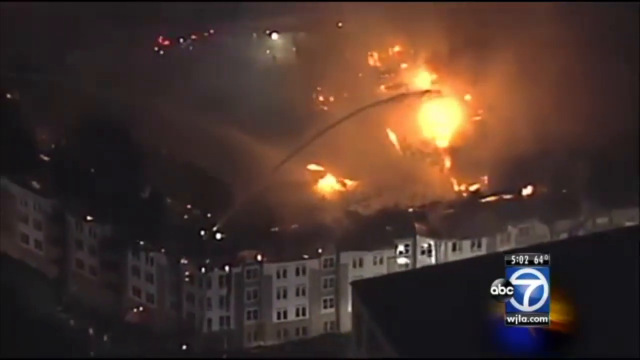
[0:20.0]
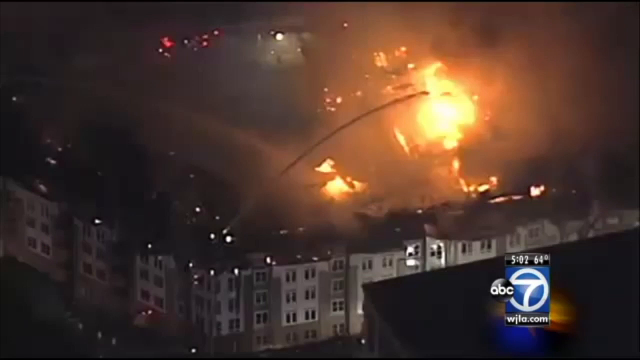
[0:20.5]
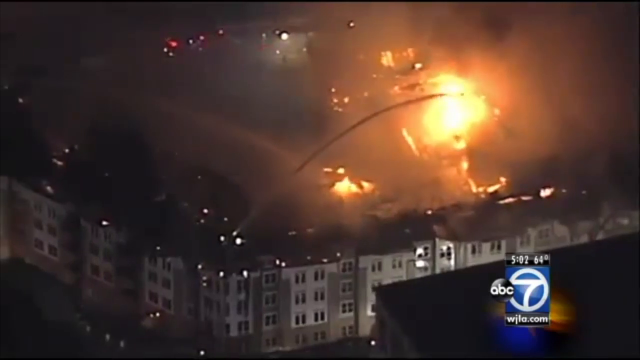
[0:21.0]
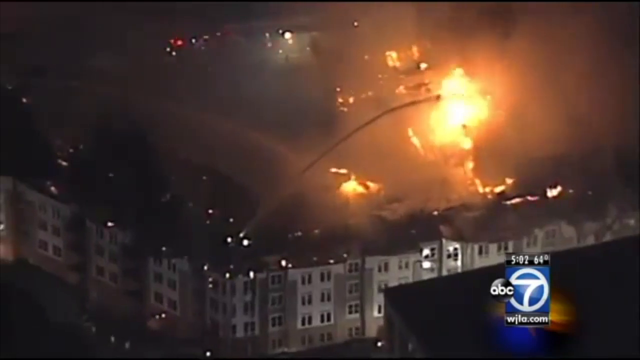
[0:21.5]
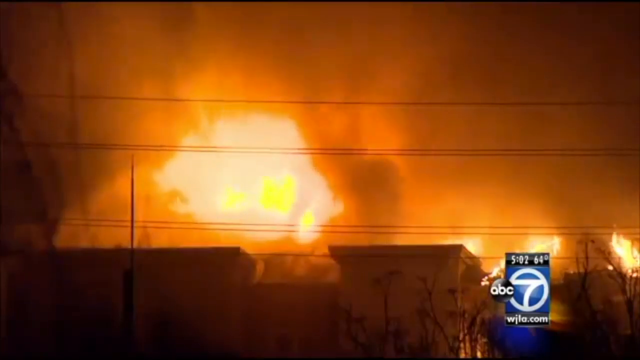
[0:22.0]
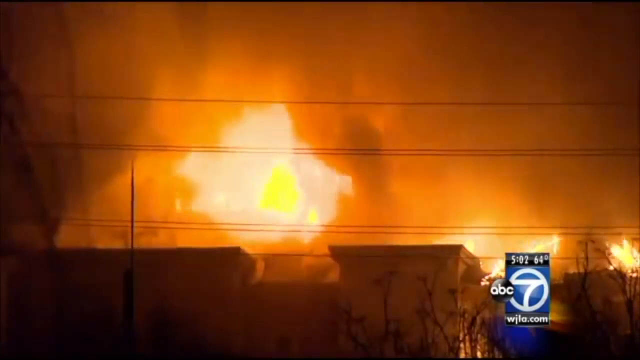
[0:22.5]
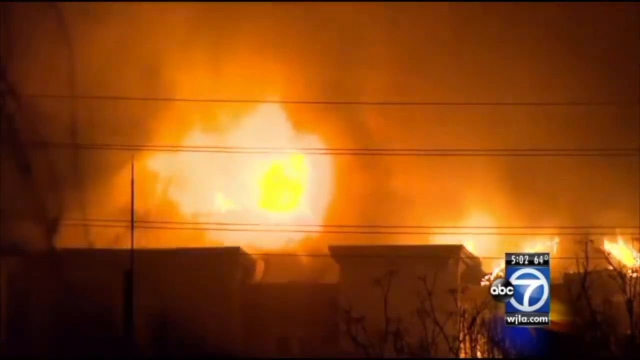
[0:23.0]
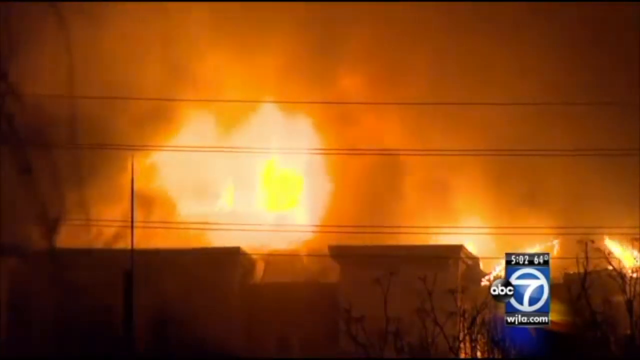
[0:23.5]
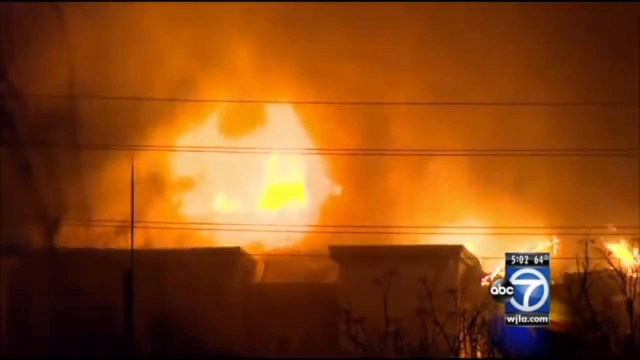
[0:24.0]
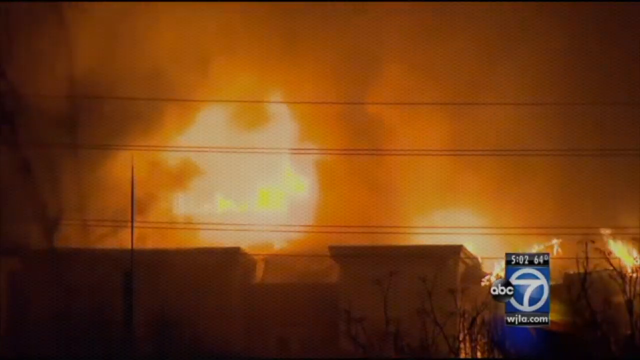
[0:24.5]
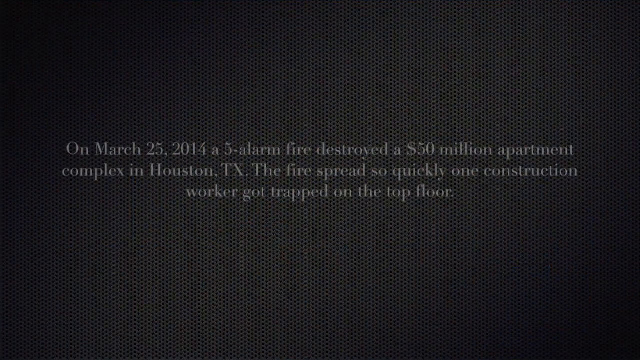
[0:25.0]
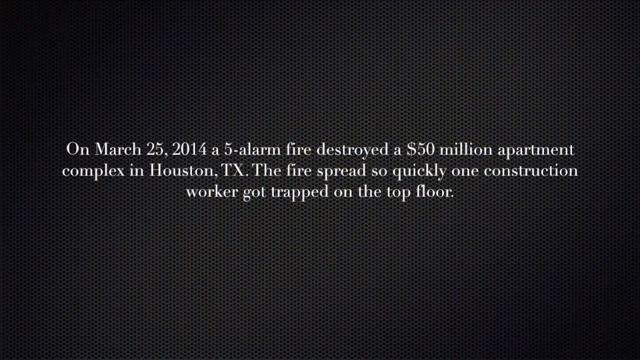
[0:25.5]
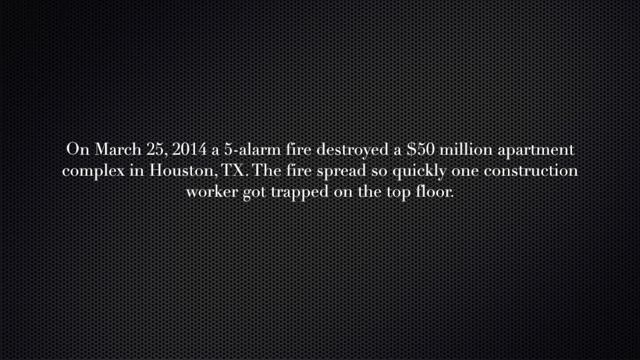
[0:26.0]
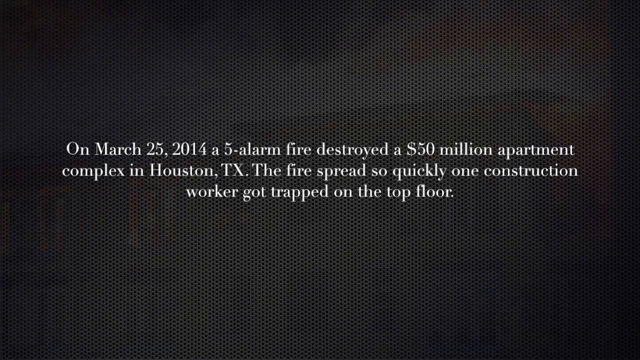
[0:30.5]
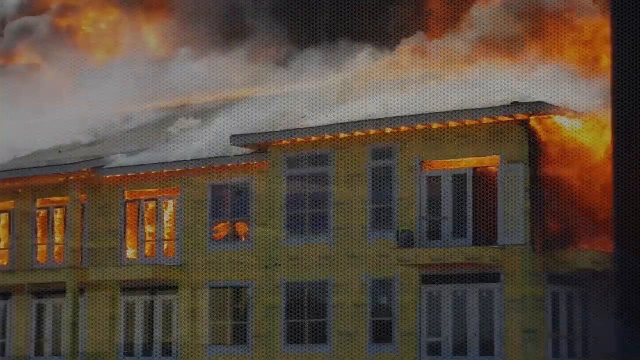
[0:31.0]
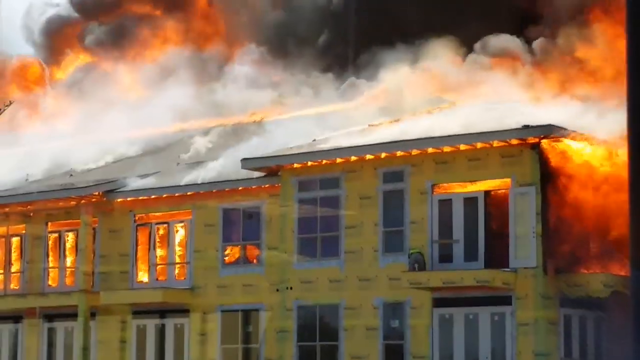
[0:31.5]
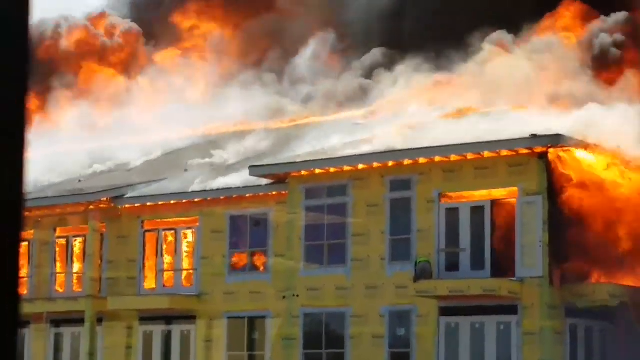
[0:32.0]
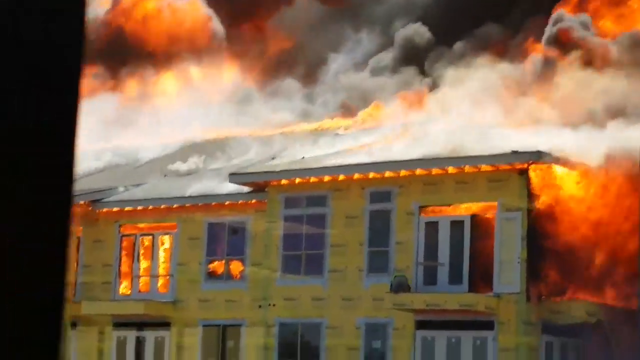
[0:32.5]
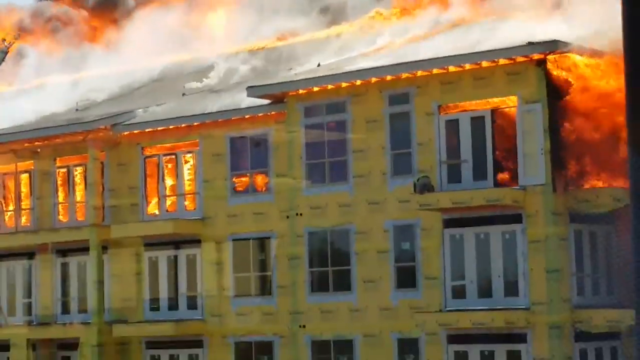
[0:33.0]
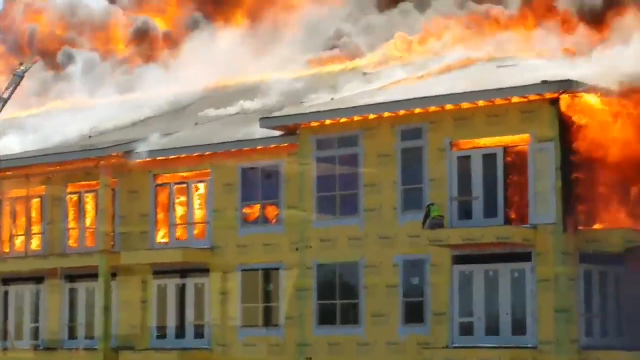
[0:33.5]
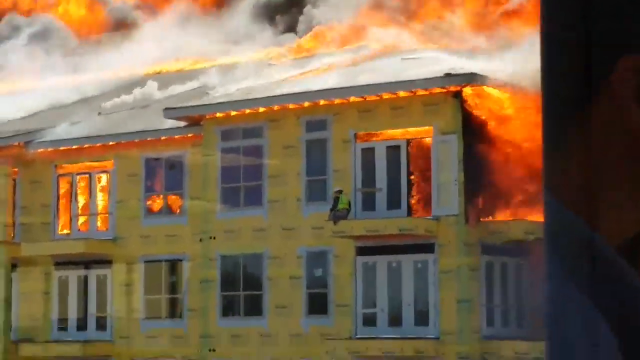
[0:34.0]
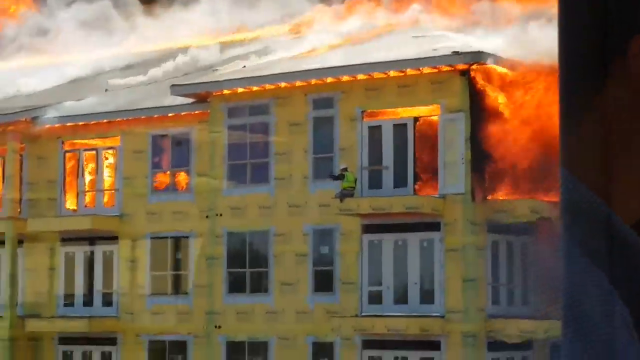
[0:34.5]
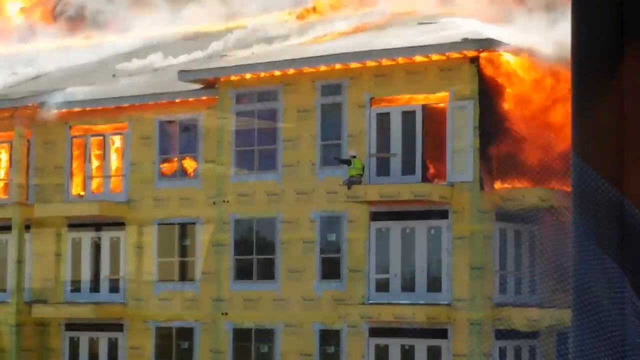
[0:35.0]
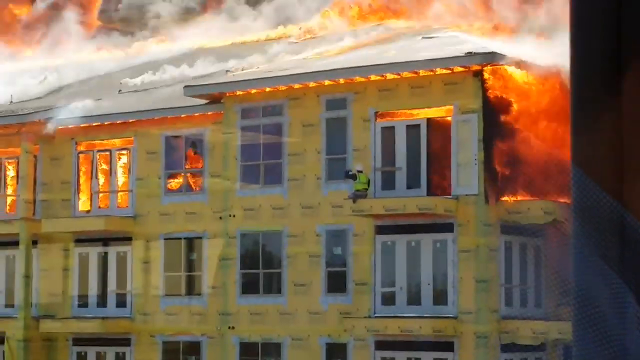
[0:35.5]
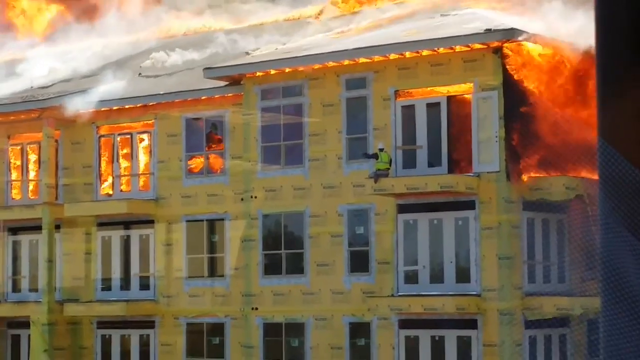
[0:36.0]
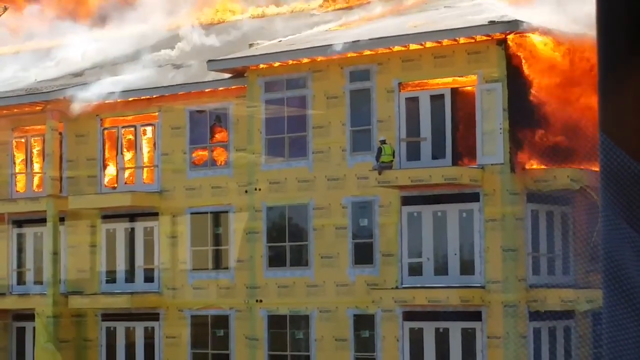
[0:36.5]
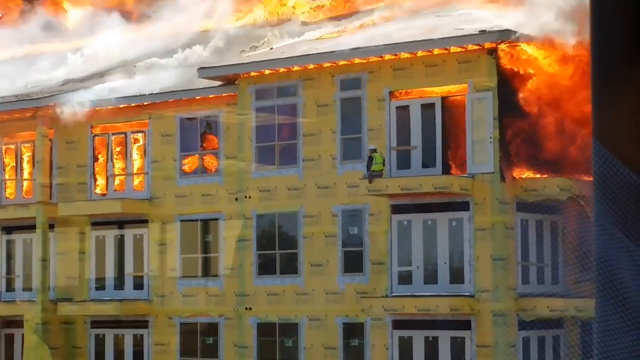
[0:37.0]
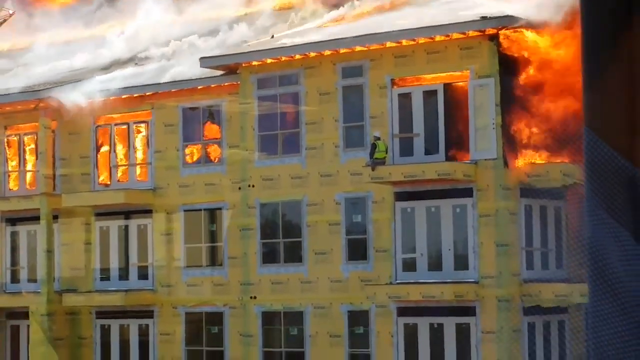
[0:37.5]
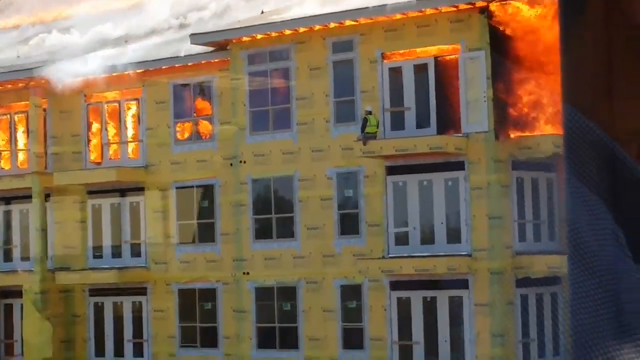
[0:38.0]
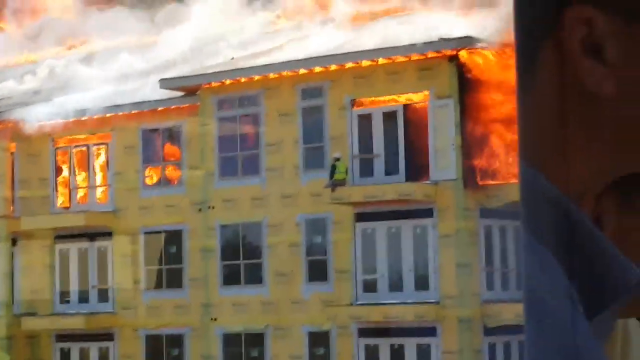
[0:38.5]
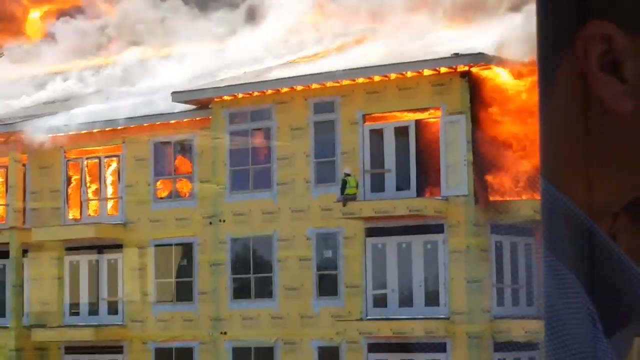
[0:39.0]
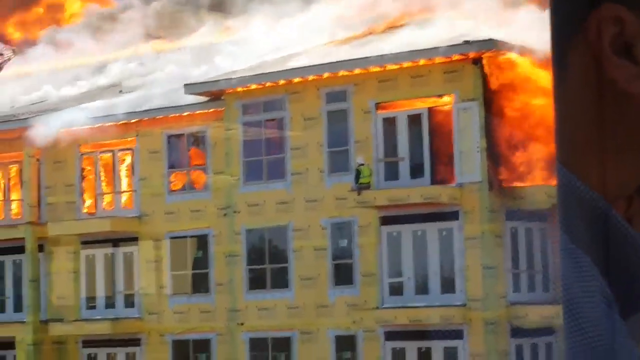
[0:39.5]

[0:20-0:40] Water comes from the left side from one of the firefighters. In the bottom right corner is a Channel 7 logo, a 7 inside a white circle, the news logo for ABC, with "ABC" next to it in a small black bubble. The video shows different shots of the fire from different spots; one seems to show the fire from ground level, with wires along the buildings. Then a black screen with writing appears, and the caption reads: "on March 25, 2014, a five alarm fire destroyed a $50 million apartment complex in Houston, Texas, the fire spread so quickly, one construction worker got trapped on the top floor." The next shot shows the fire burning through one of the buildings. The building is yellow, and at the top right of the frame the construction worker is out on a ledge or balcony.